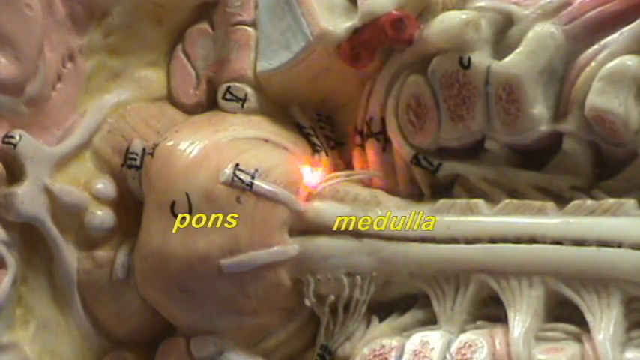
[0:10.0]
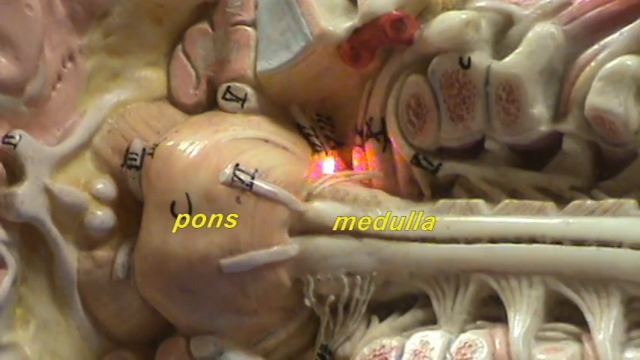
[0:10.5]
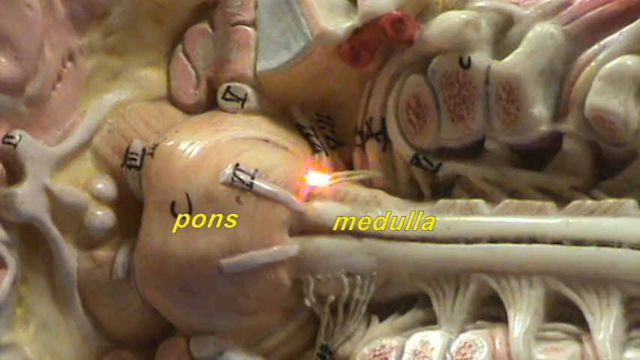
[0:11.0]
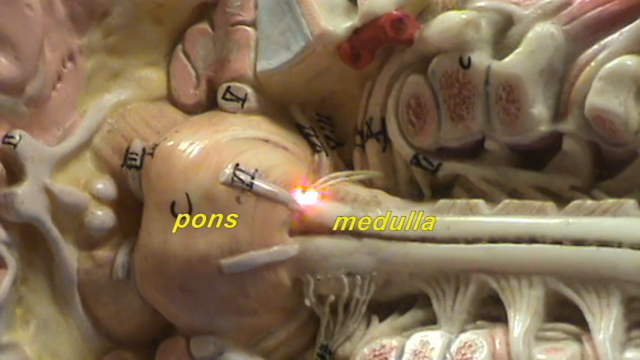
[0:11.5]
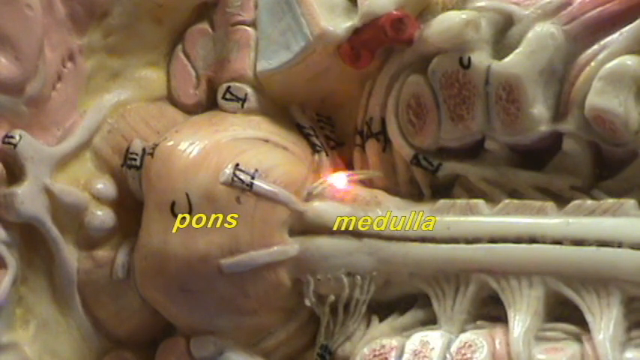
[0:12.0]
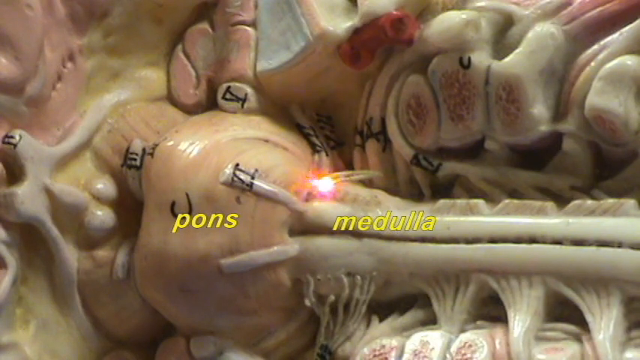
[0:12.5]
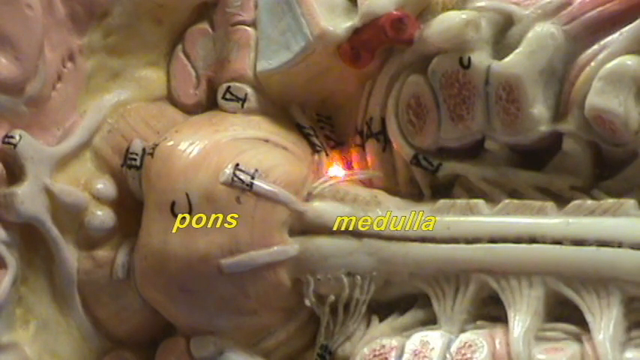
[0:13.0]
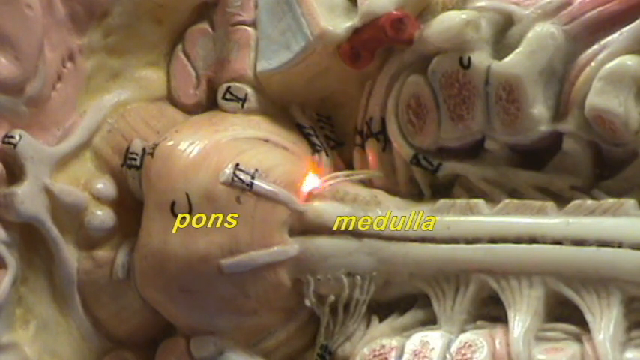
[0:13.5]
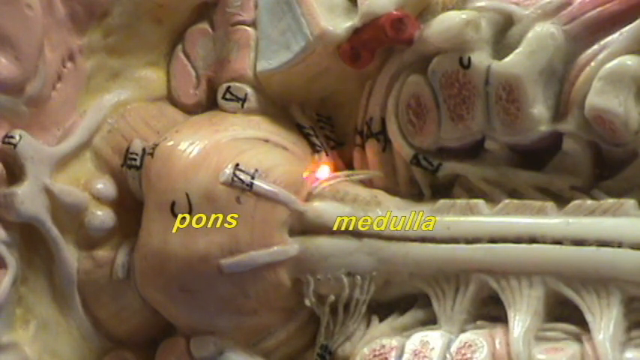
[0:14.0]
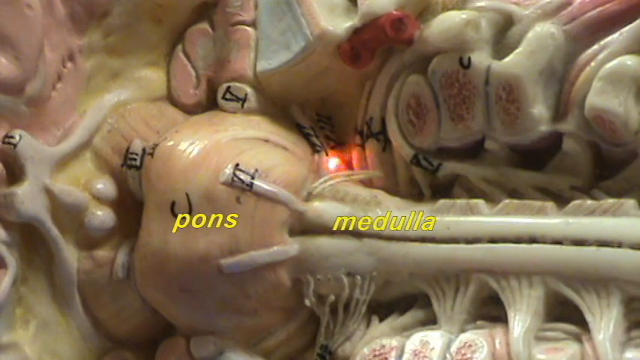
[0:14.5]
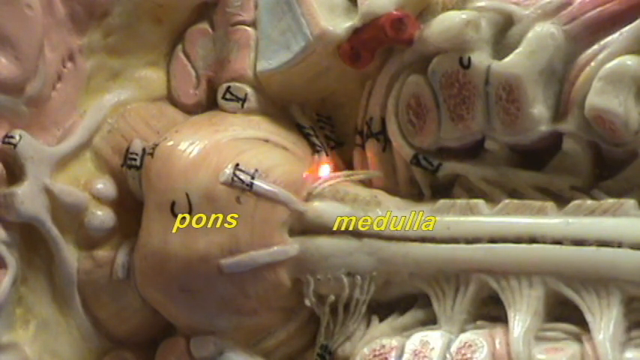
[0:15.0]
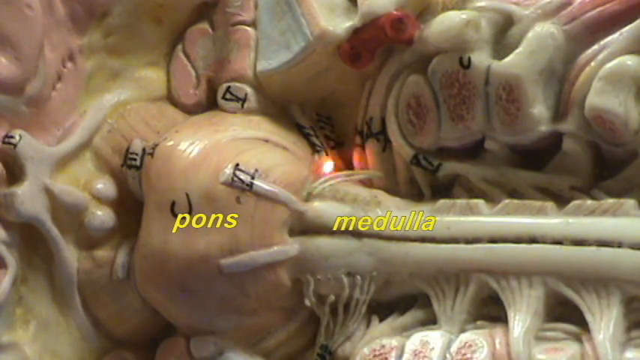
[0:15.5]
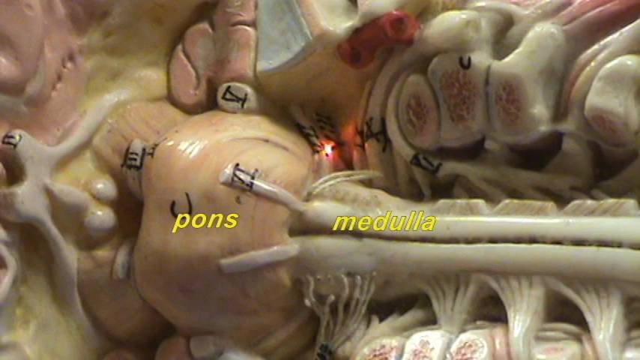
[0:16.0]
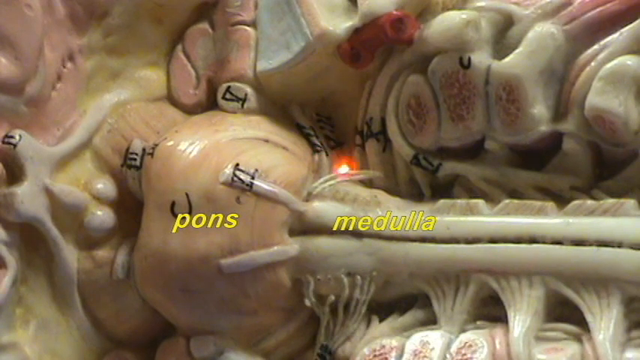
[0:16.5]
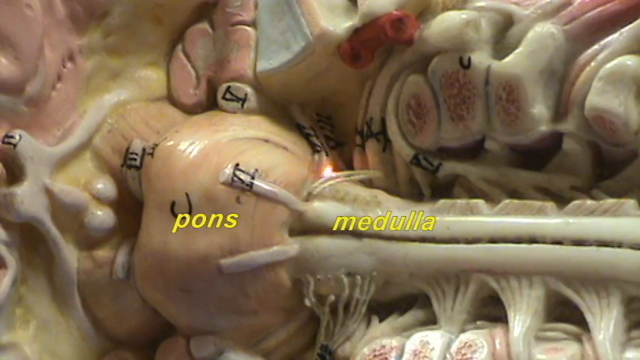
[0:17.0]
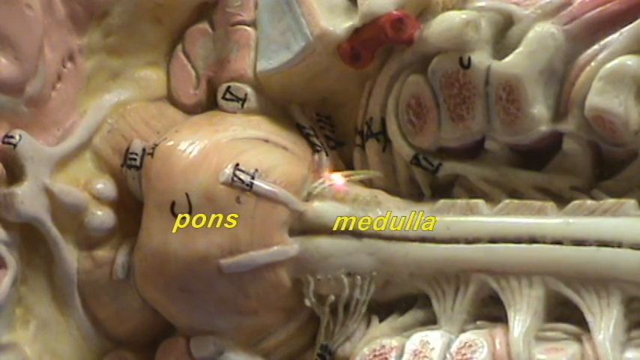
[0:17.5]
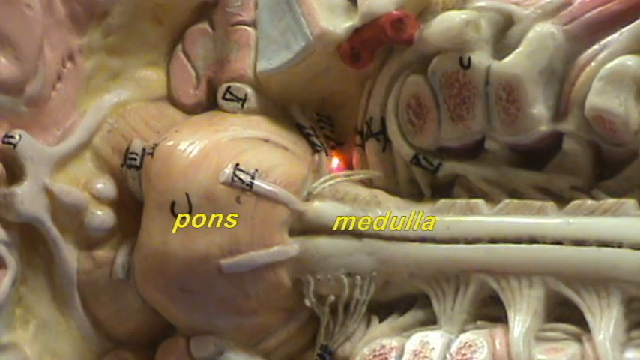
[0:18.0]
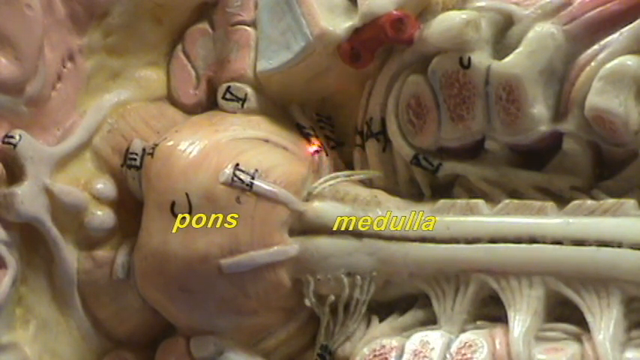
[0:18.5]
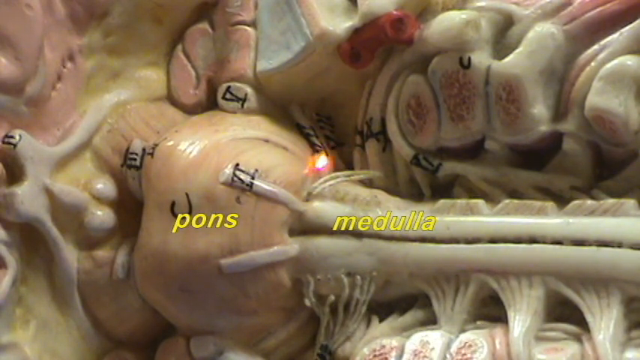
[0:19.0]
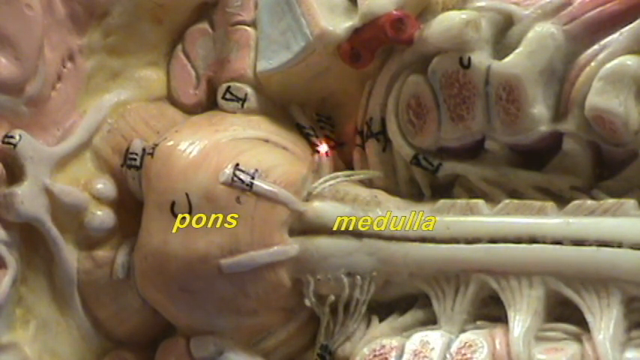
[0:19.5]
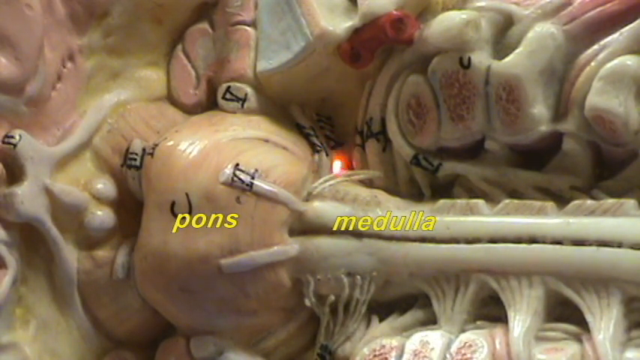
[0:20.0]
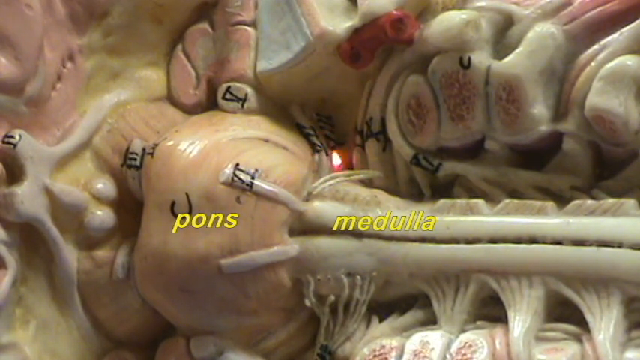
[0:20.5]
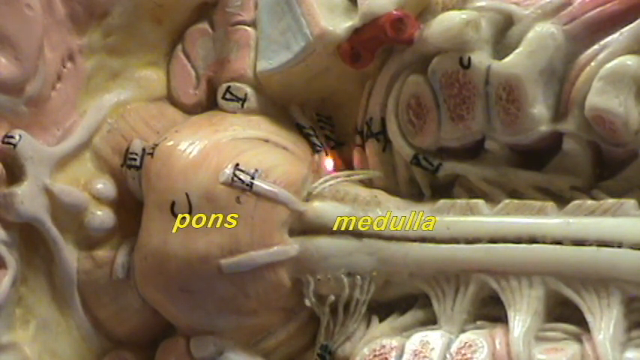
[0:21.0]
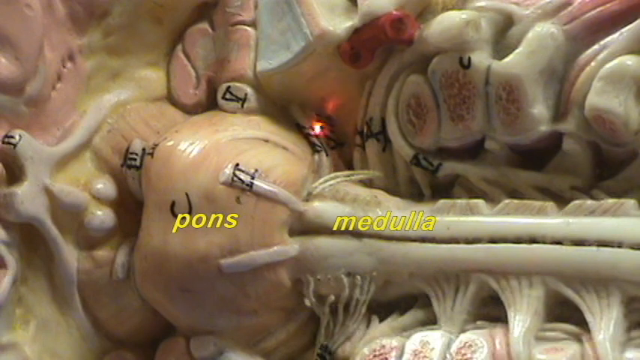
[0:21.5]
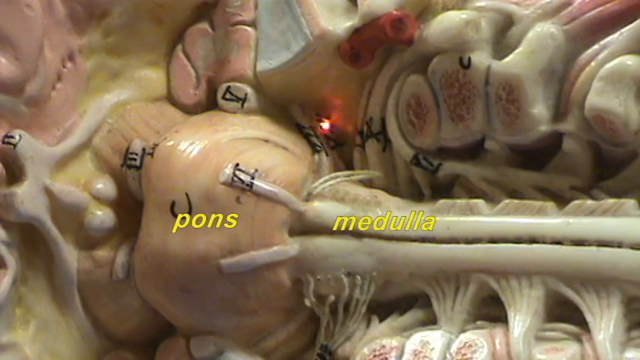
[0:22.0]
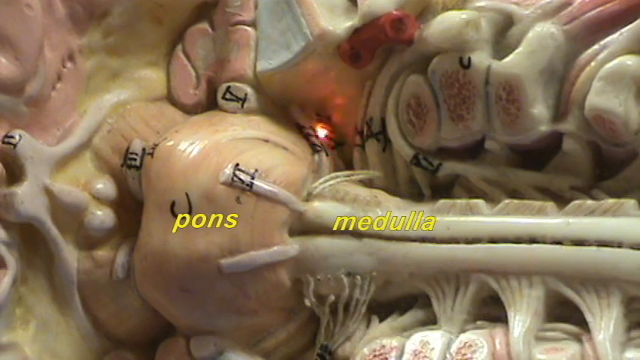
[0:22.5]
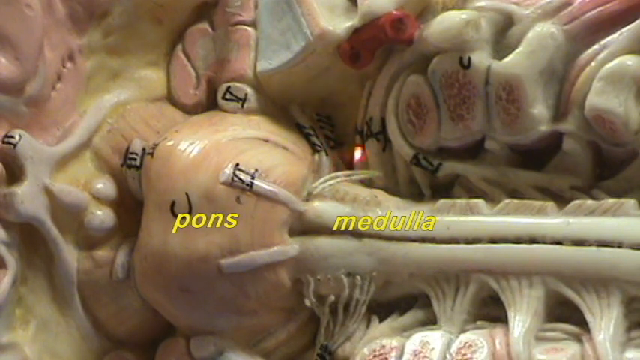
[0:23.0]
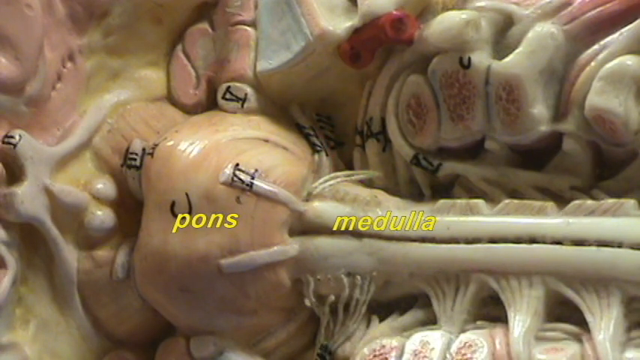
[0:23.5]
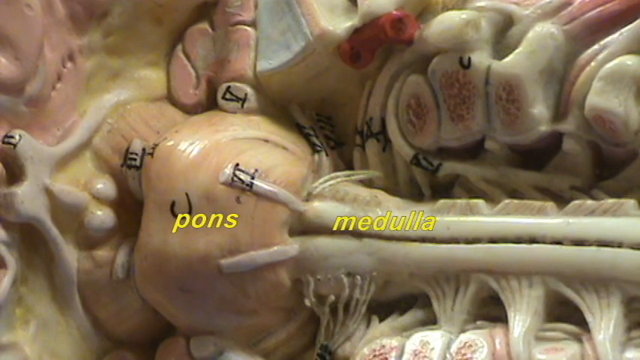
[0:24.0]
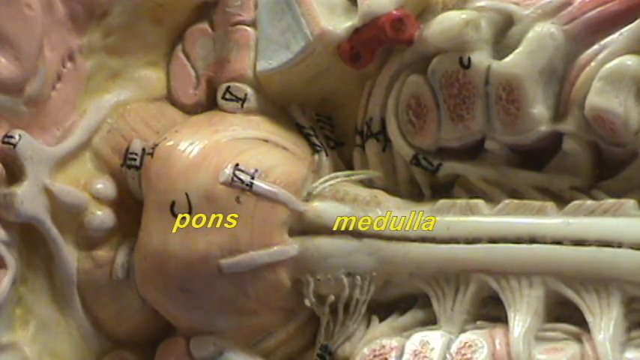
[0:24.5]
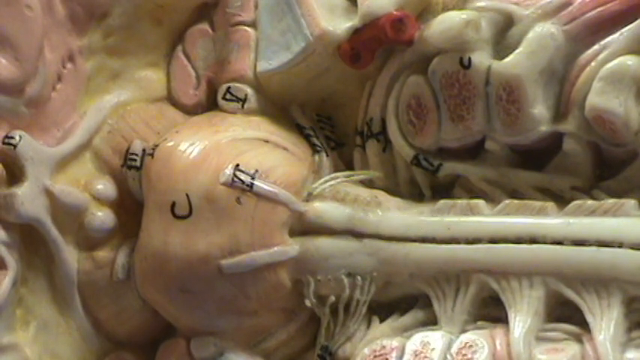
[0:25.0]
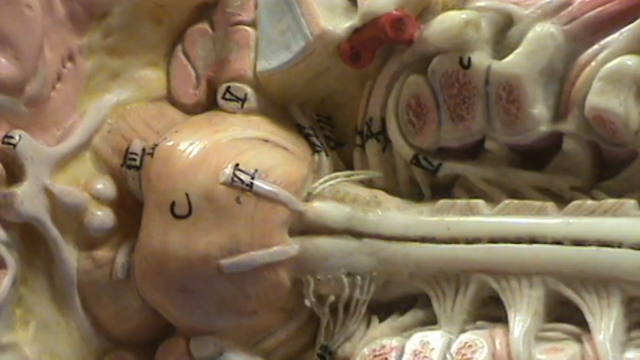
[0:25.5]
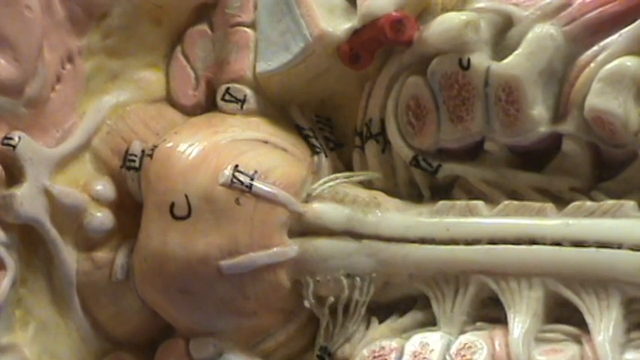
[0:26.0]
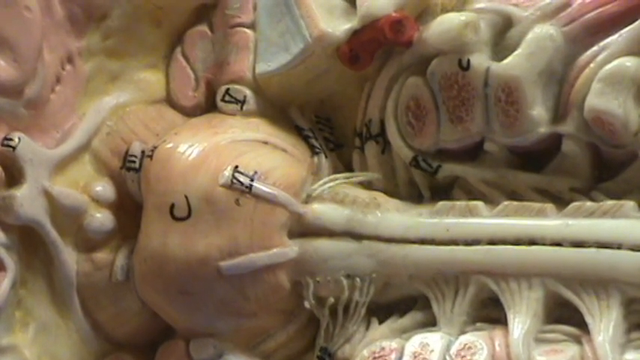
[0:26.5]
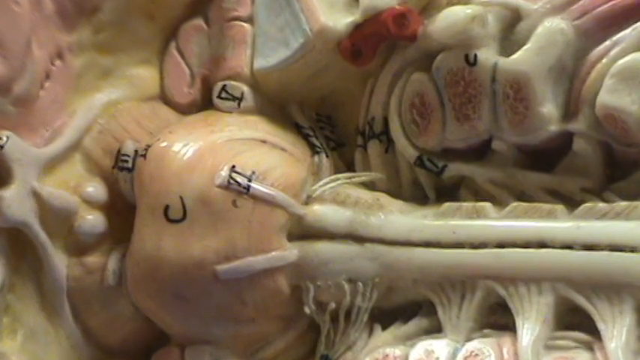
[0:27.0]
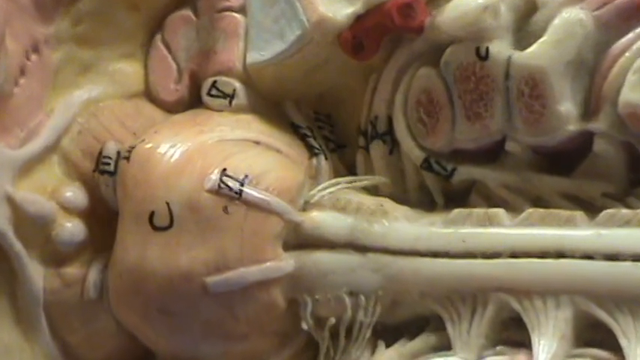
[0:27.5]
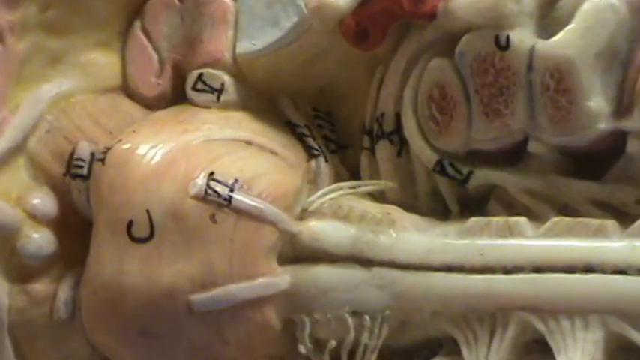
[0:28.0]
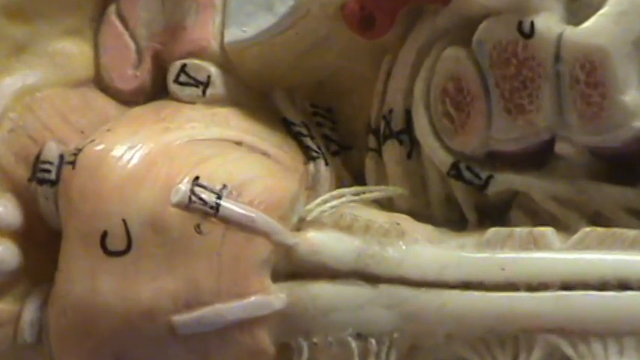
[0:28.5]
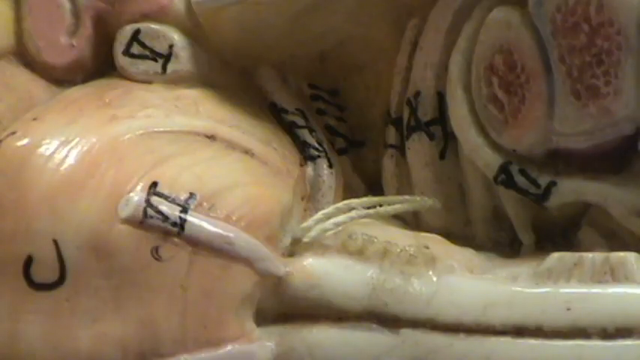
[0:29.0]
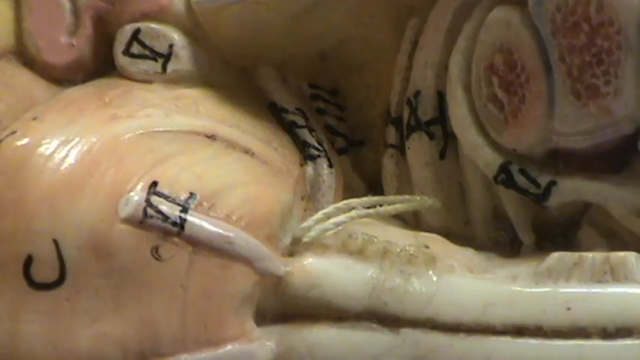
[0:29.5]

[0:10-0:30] The medical video shows the area around the pons and the medulla of the spinal cord on what looks like an actual model of the inside of the human body, apparently where the spinal cord attaches to the brain. Someone uses a laser pointer to point to areas between the pons and the medulla, in the upper part of the spinal cord. The red light moves up and down and side to side within this area, neither very fast nor slow. The video then zooms in to the area where the laser pointer was pointing.